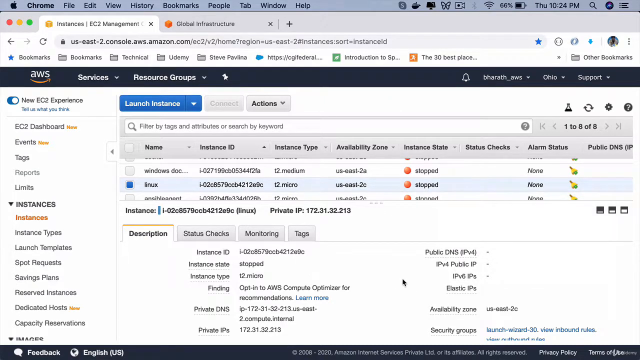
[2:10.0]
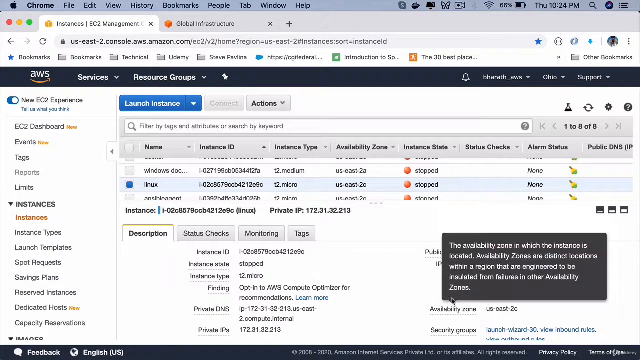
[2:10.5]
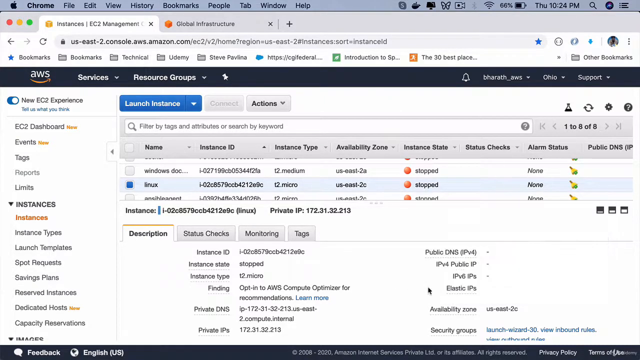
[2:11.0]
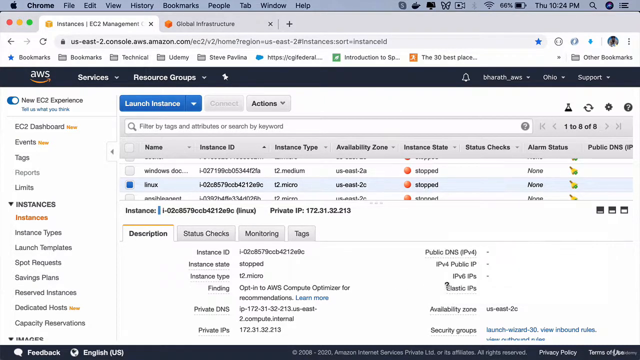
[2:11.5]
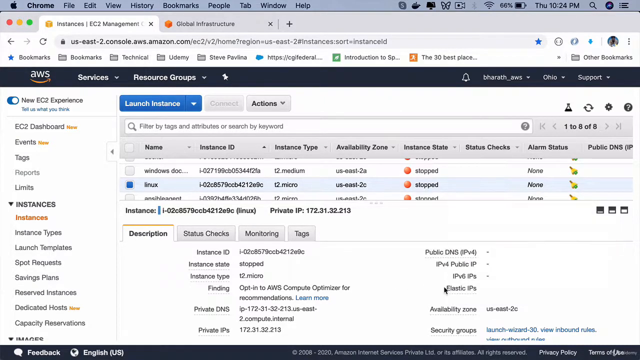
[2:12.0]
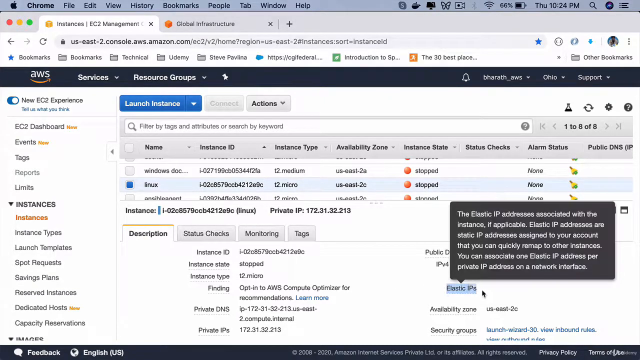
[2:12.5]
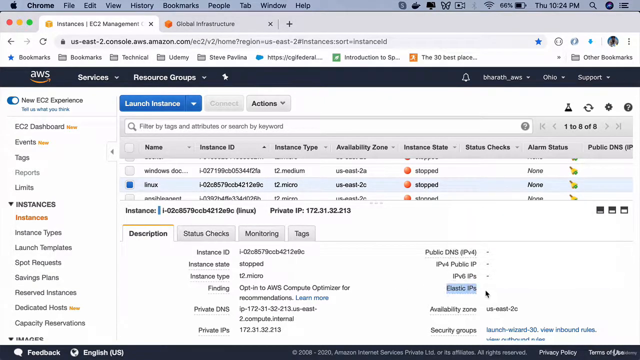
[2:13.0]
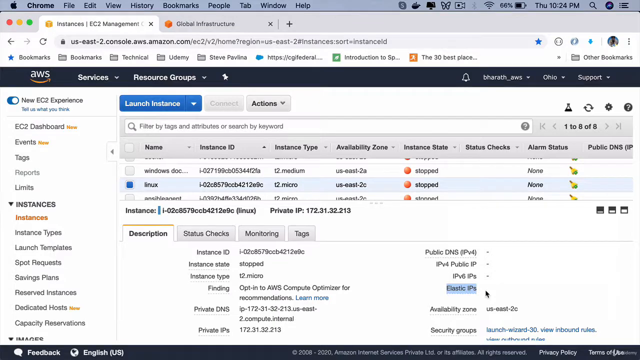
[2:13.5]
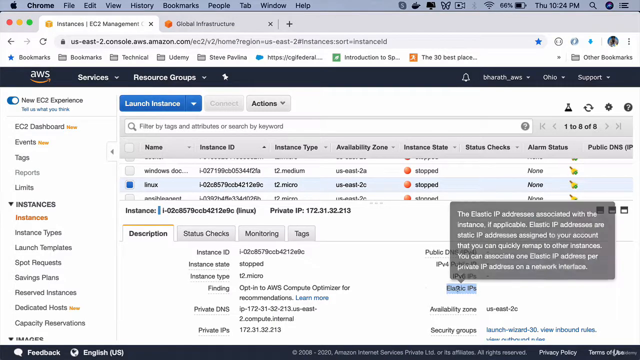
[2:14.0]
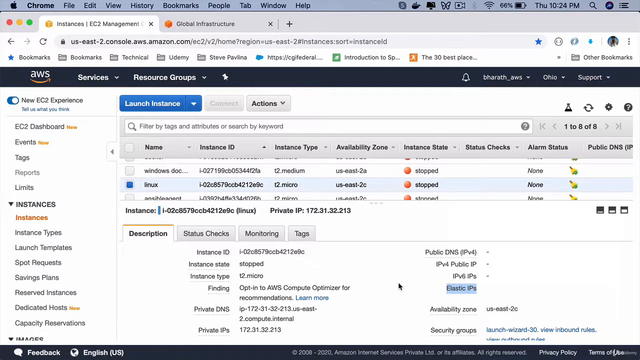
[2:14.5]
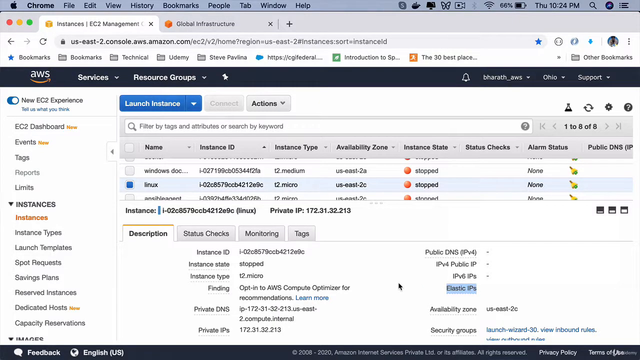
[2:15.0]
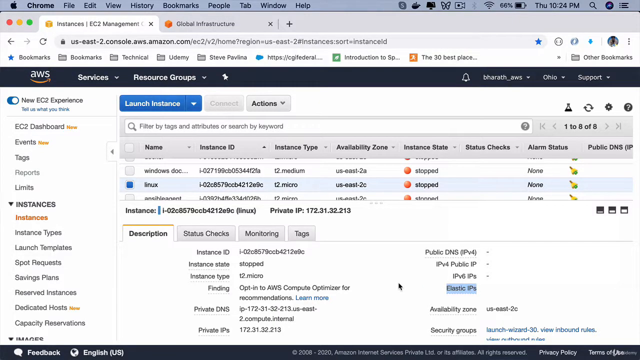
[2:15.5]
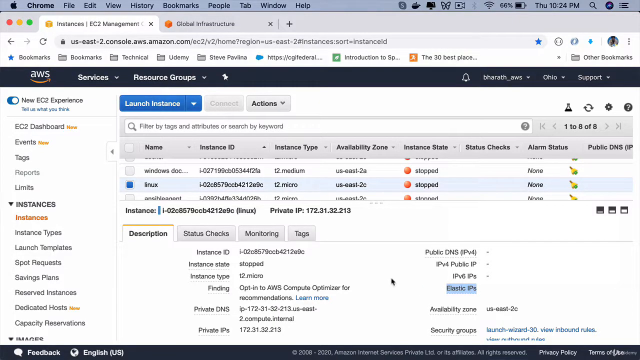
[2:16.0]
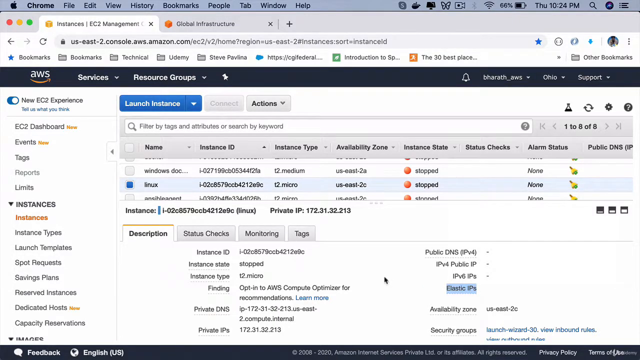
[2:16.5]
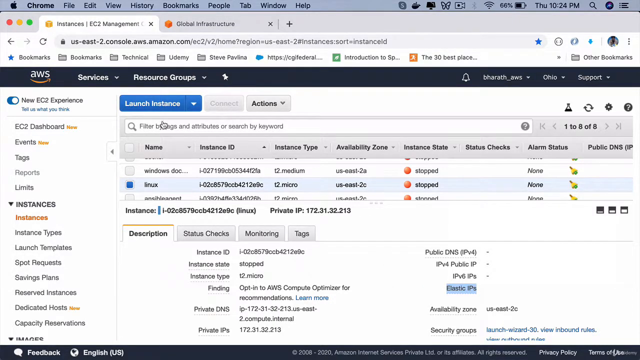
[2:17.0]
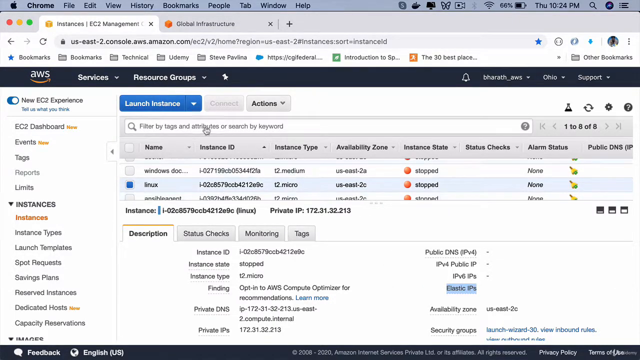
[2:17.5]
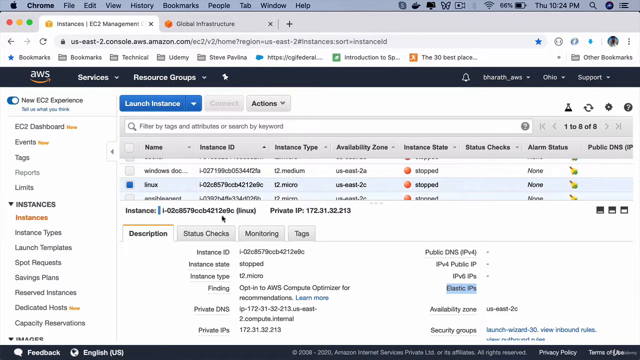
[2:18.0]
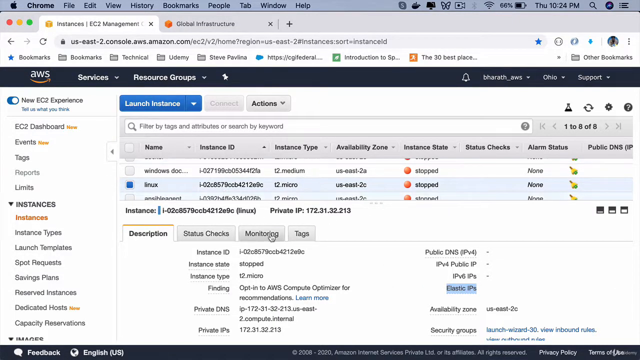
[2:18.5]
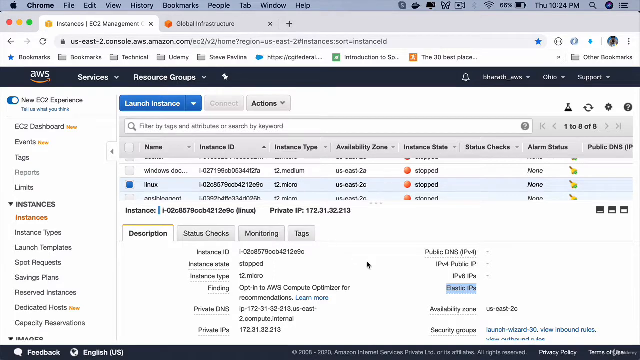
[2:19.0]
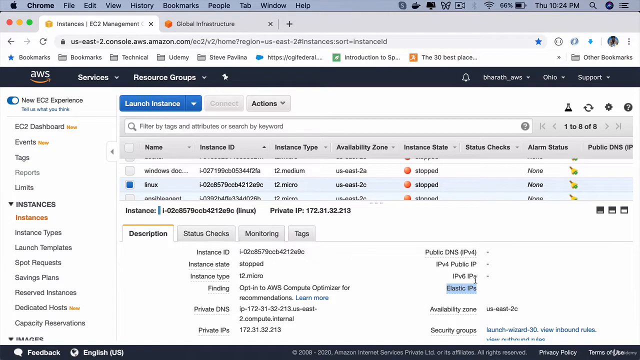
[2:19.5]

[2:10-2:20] Someone's Mac desktop fills the slightly wide video. At the top is the typical Mac menu with File, Edit, View, History, Bookmarks, People, Tab, Window and Help. Below it, two web browser tabs are open, and the first one, labeled "Instances, EC2 Management", is active. In the upper left of the page is the AWS logo with the smile underneath, and to the right are drop-down menus for "Services" and "Resource Groups". The left-hand sidebar has "New EC2 Experience", which is toggled on, followed by "EC2 Dashboard", "Events", "Tags", "Reports" and "Limits", and then the "Instances" drop-down, expanded with "Instances", "Instance Types", "Launch Templates", "Spot Requests", "Savings Plan" and "Reserved Instances". In the center is a management pane with tabs such as "Description", "Status Checks", "Monitoring" and "Tags"; the person moves the cursor around it, pointing to different areas without clicking anything specific.